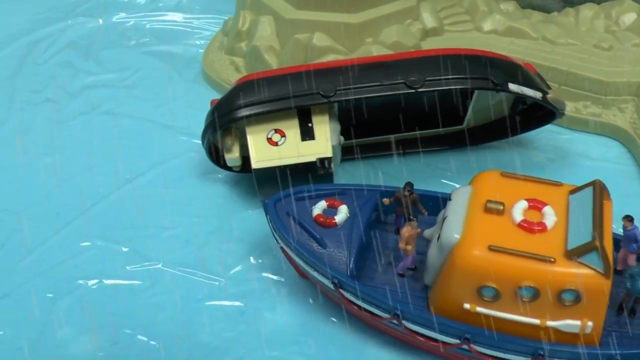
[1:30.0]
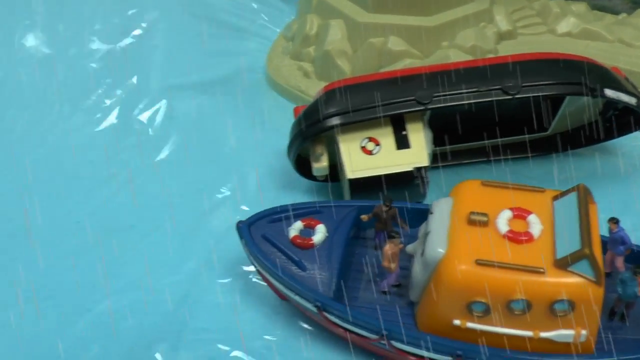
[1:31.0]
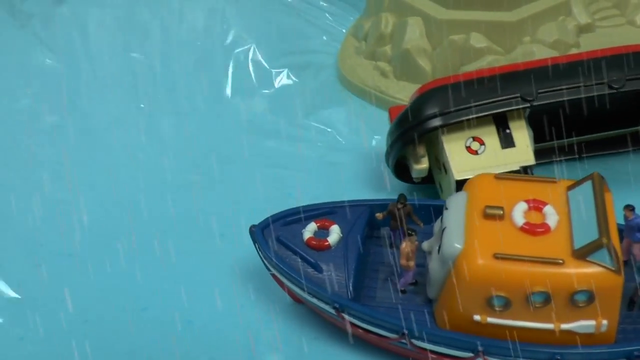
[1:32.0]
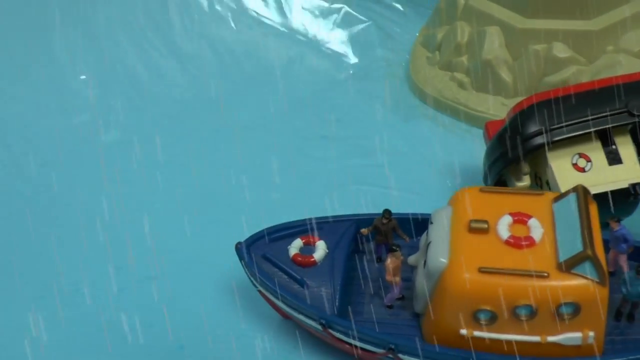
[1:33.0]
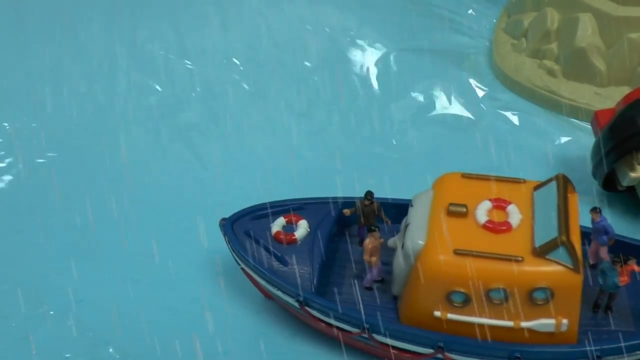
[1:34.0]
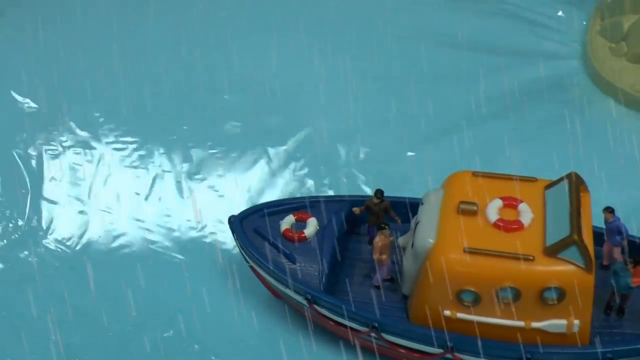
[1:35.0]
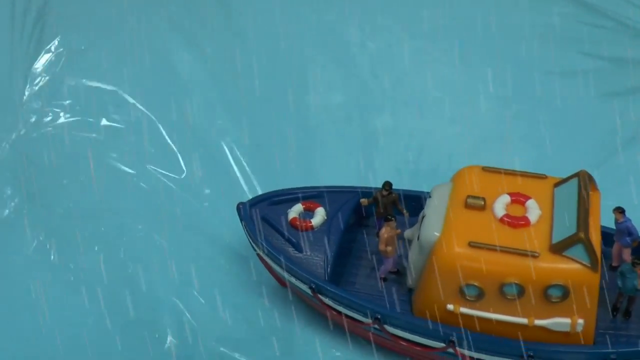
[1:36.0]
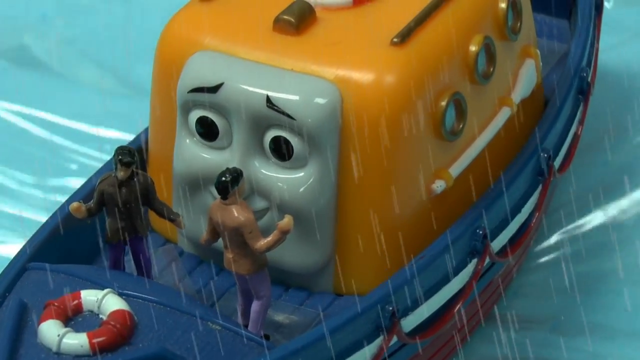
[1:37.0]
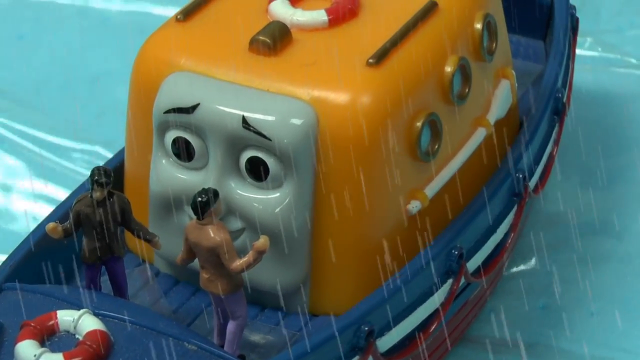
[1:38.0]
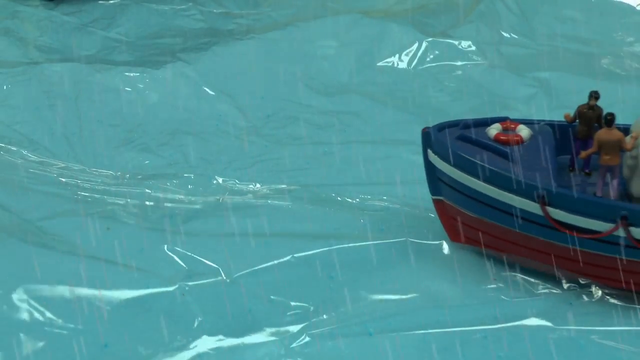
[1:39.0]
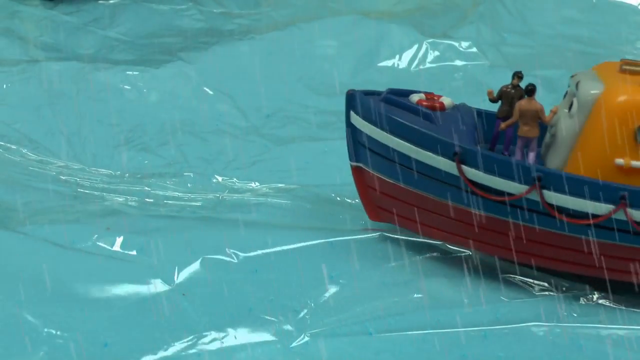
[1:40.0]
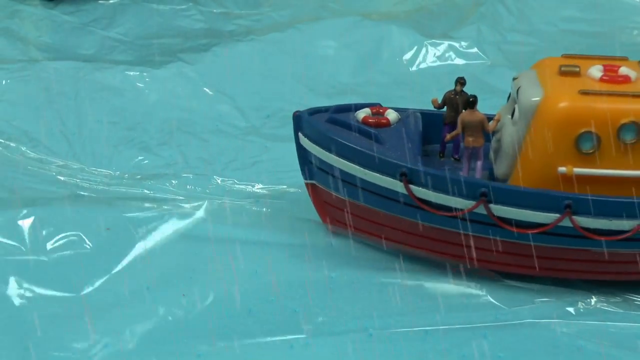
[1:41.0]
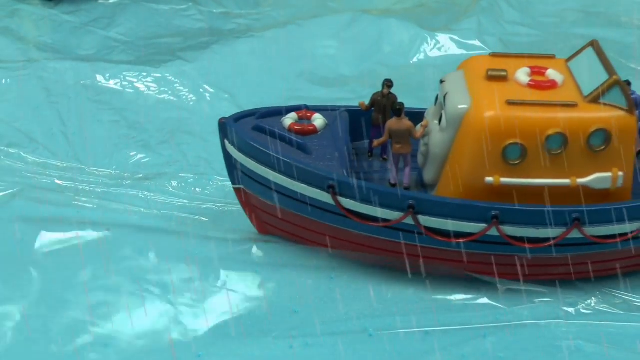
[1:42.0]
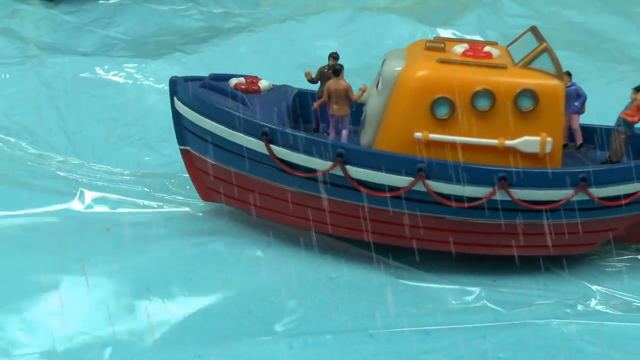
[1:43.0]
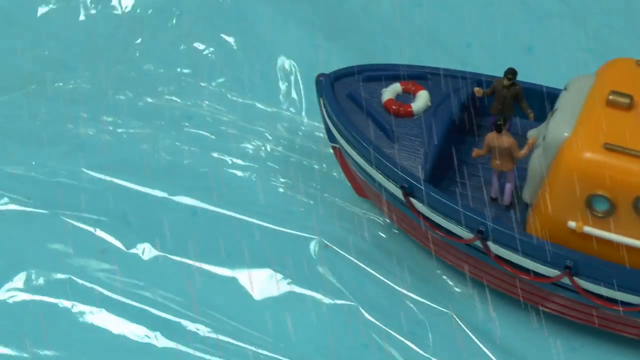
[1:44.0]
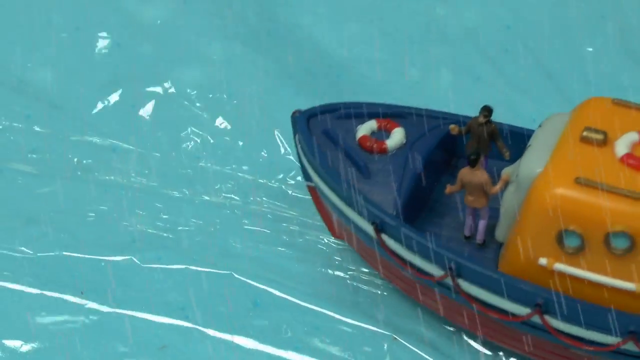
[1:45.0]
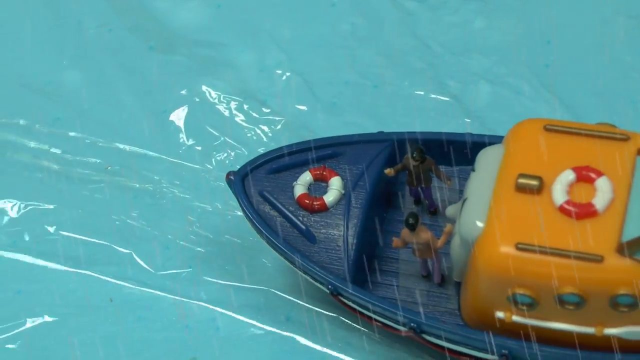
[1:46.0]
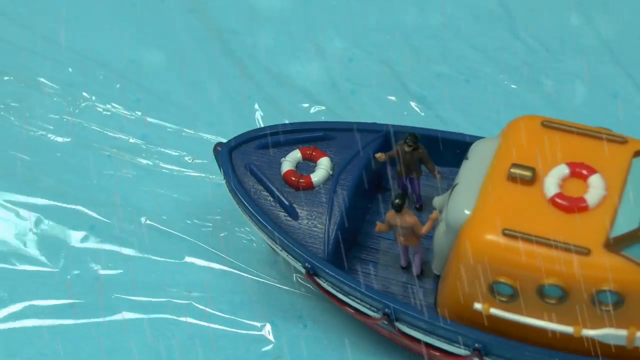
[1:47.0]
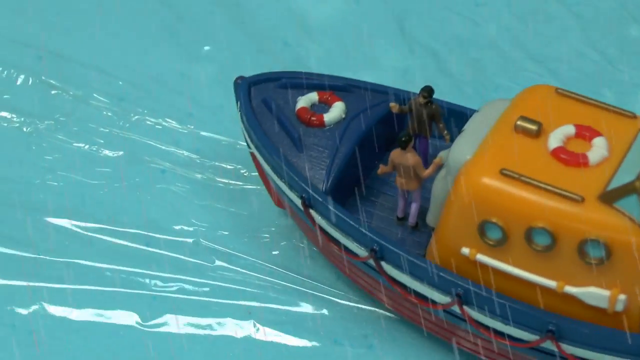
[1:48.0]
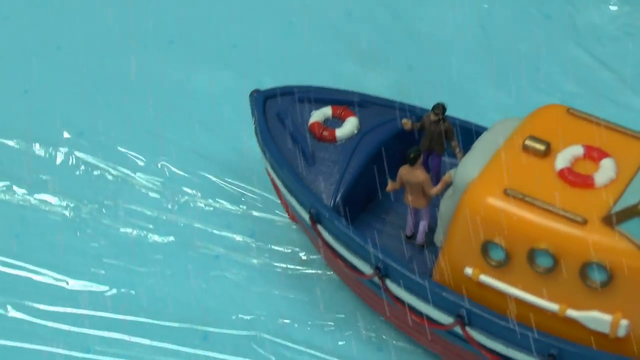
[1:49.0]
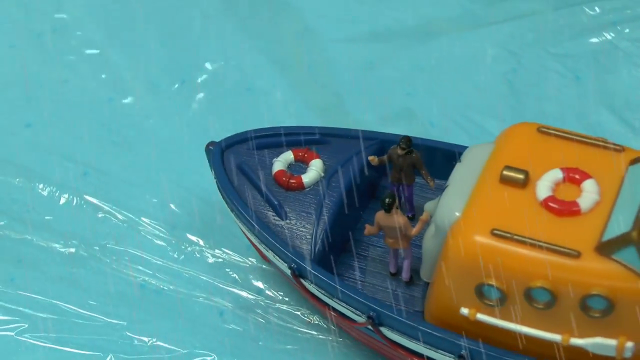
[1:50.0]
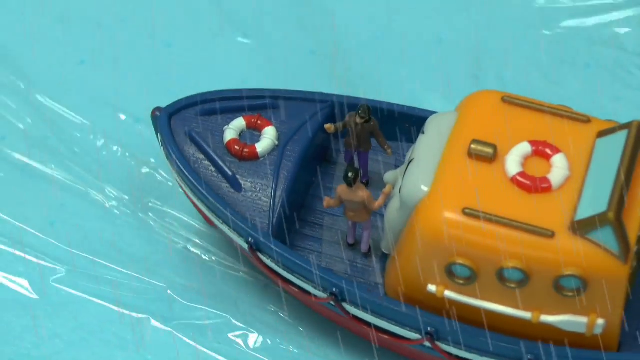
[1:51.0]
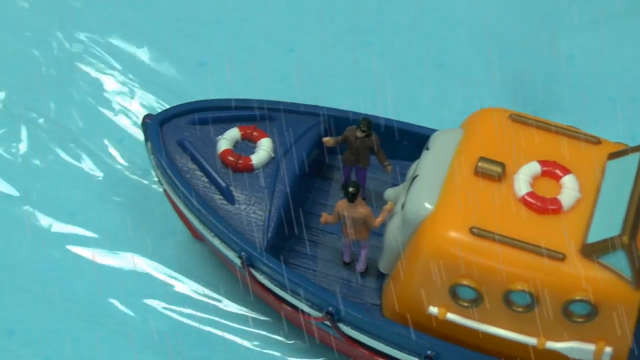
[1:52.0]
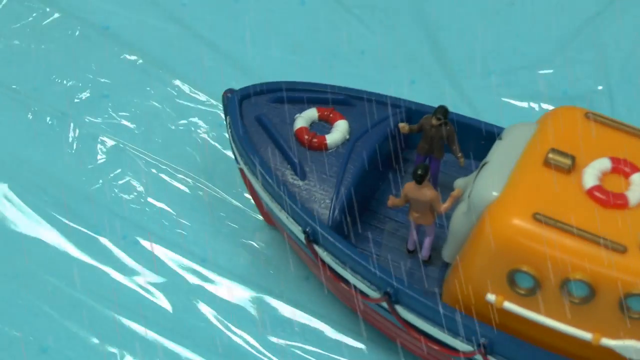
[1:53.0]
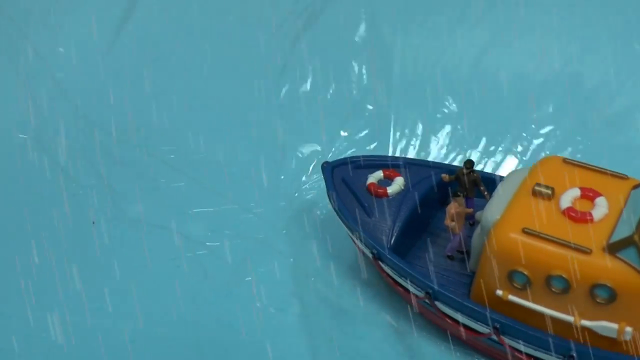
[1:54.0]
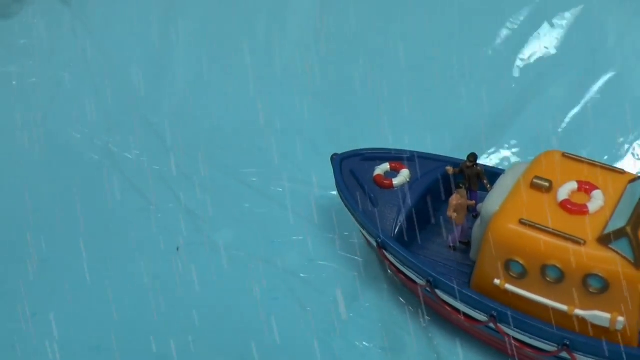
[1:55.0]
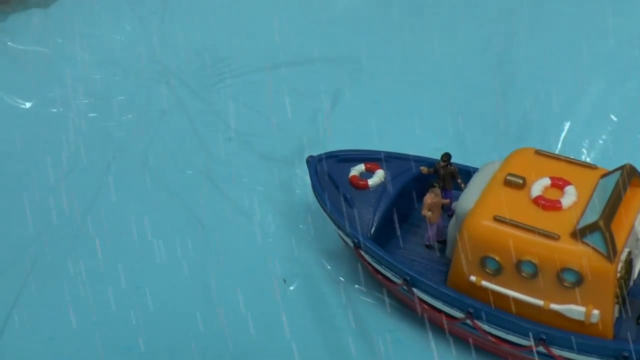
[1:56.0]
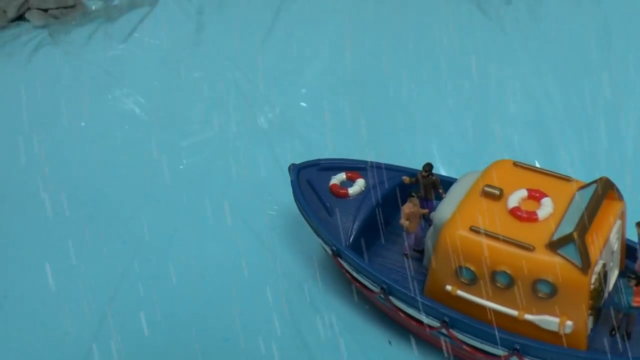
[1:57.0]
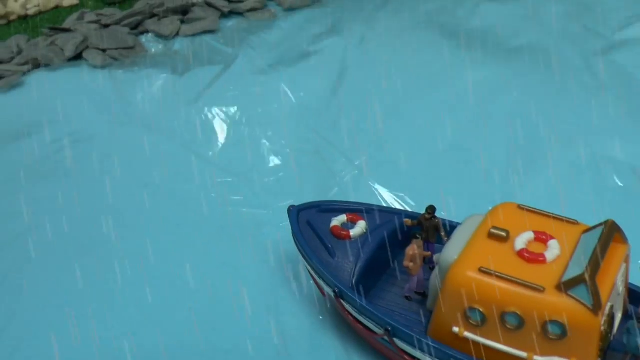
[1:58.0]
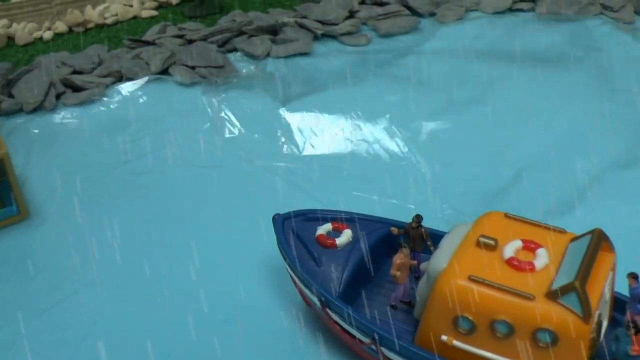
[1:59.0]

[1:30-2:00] The boat now points to the left and passes beneath the black capsized boat, heading back across the water with two people at the front and three at the back. A front view shows its point going down off the bottom left, followed by a closeup of the face of what is apparently a train engine: a red square with windows on the side and a gray, kind of worried-looking face. A side view shows it coming in from the right, moving up and down and waving back and forth as if hitting rough water while the plastic ripples. An overhead shot at its front shows it riding through the waves, twisting back and forth, with the plastic rippling like water, rain still coming down, and people still standing at the front. It comes up close to the shore at the top left, where gray rocks and a little green grass are visible, and a little piece comes in from the left as they get closer, probably just a few feet away.